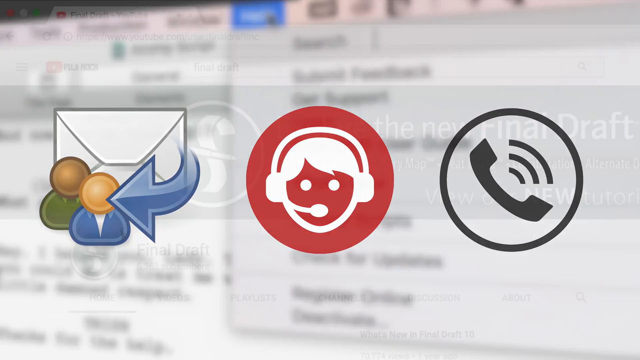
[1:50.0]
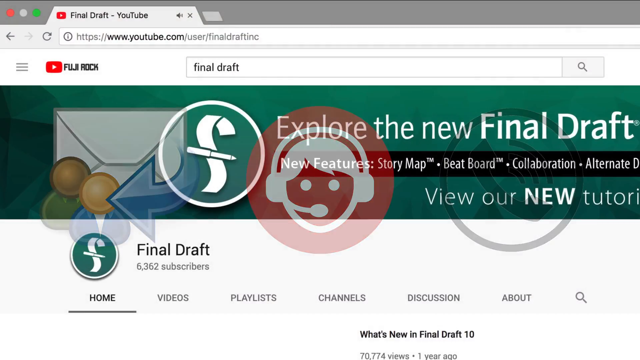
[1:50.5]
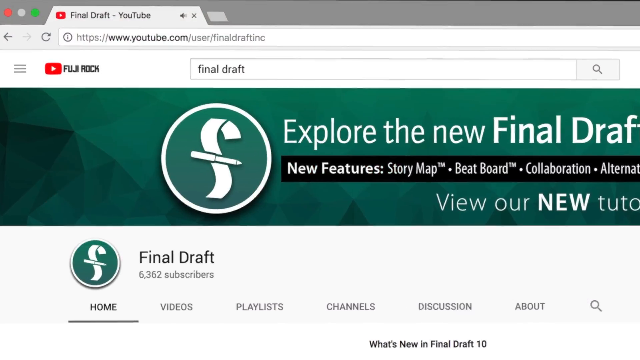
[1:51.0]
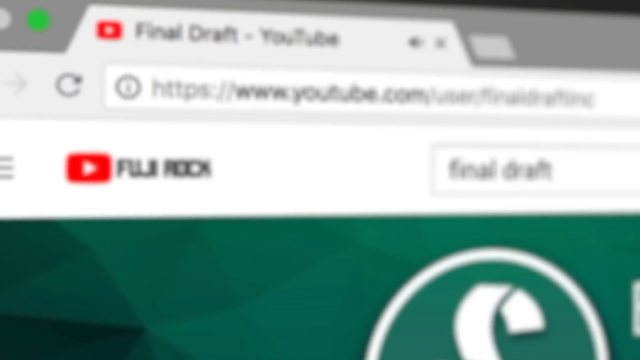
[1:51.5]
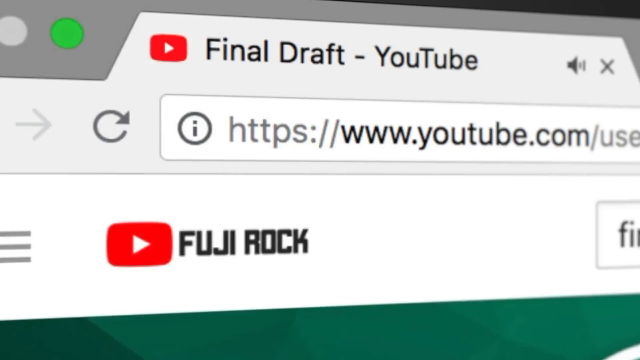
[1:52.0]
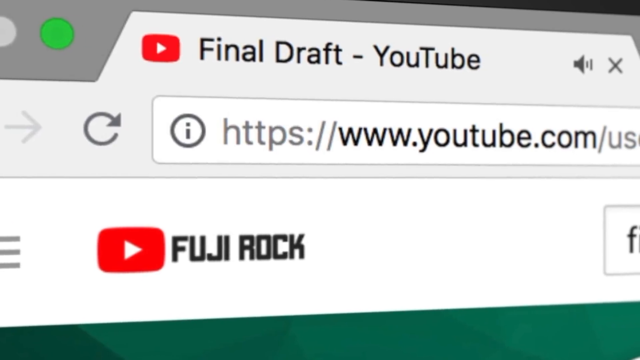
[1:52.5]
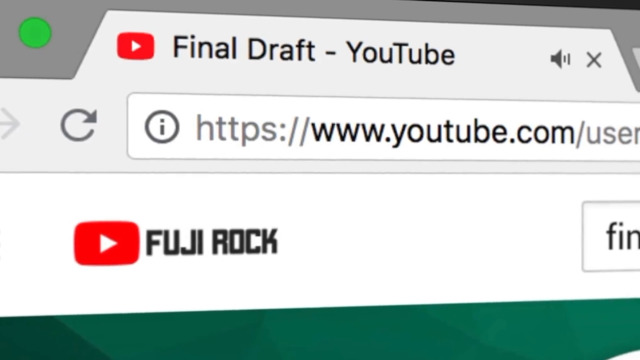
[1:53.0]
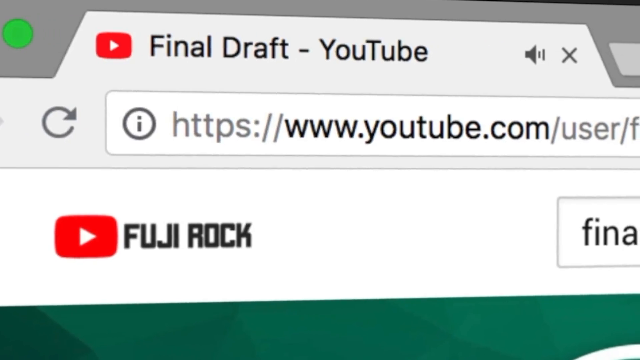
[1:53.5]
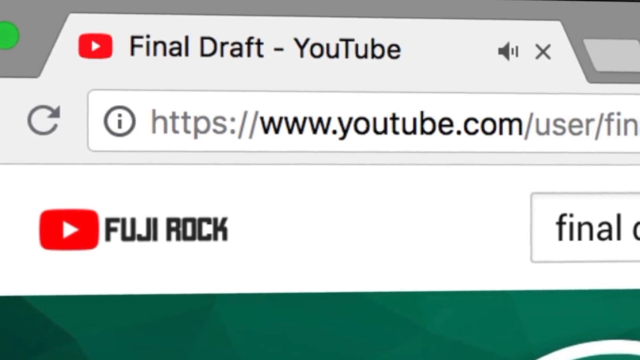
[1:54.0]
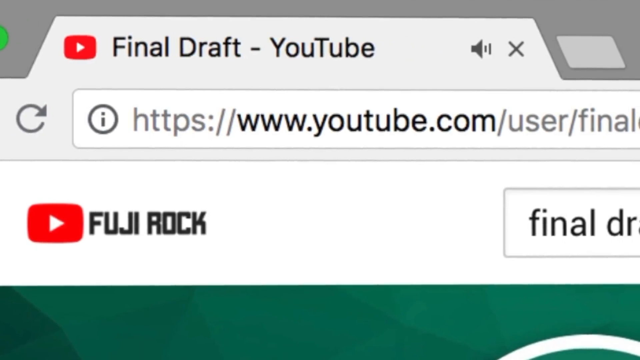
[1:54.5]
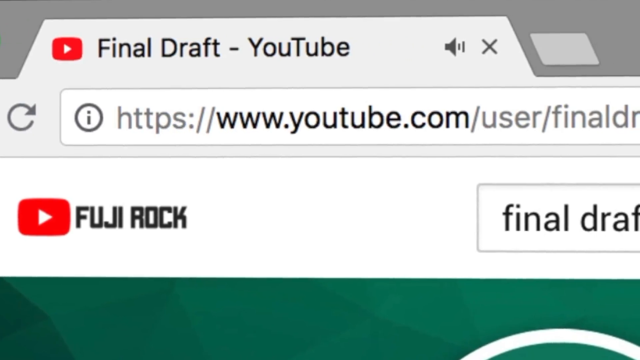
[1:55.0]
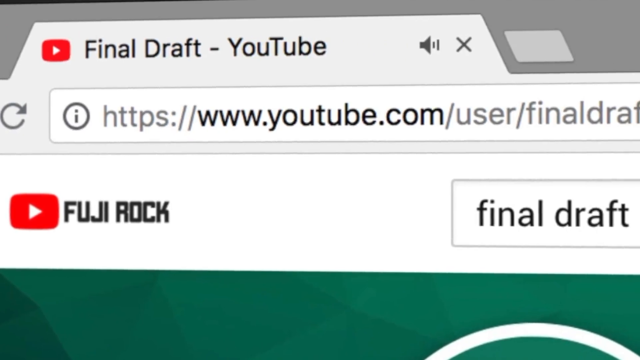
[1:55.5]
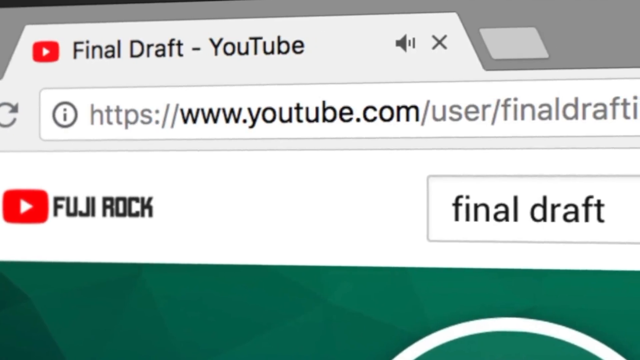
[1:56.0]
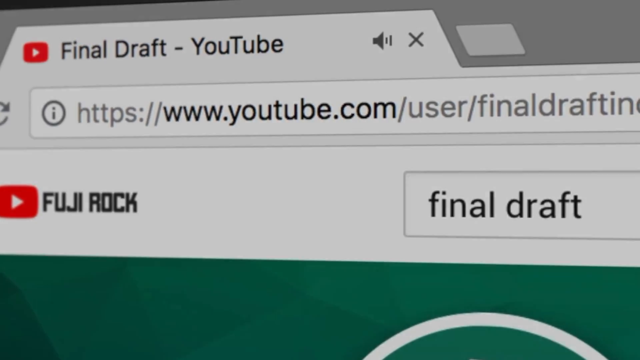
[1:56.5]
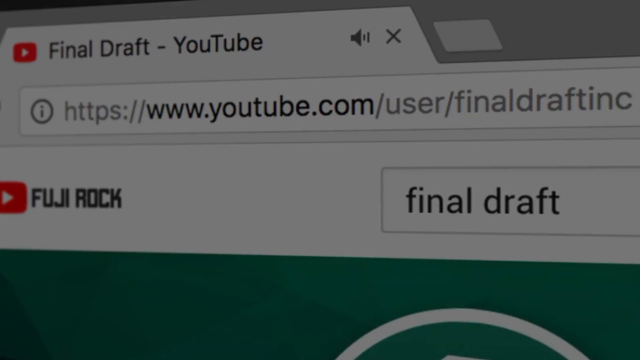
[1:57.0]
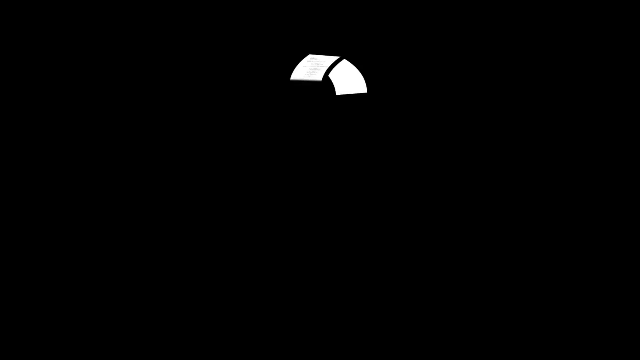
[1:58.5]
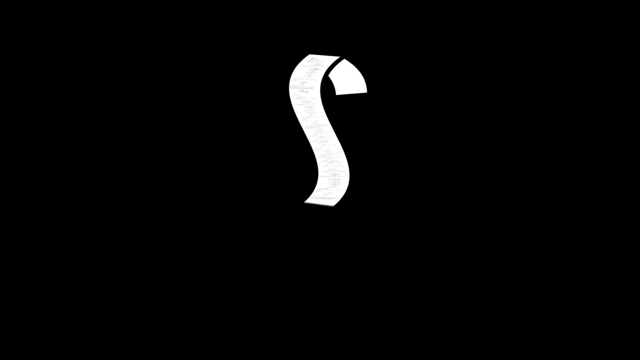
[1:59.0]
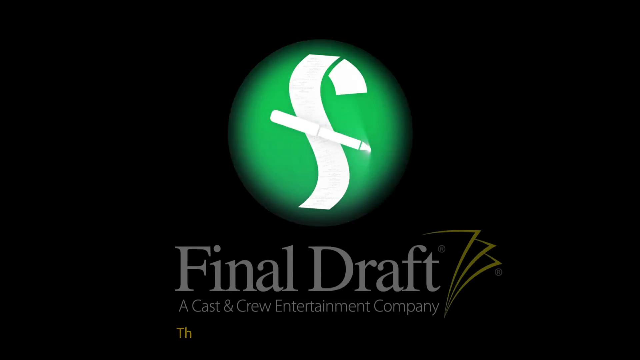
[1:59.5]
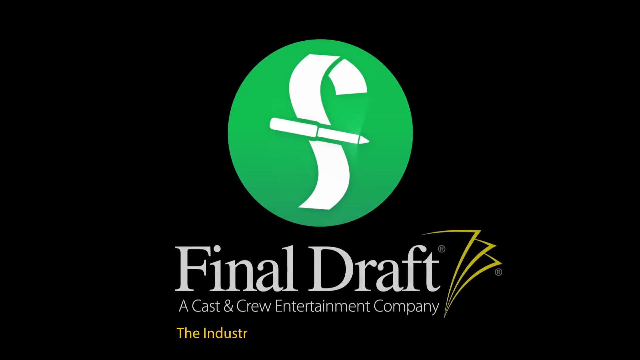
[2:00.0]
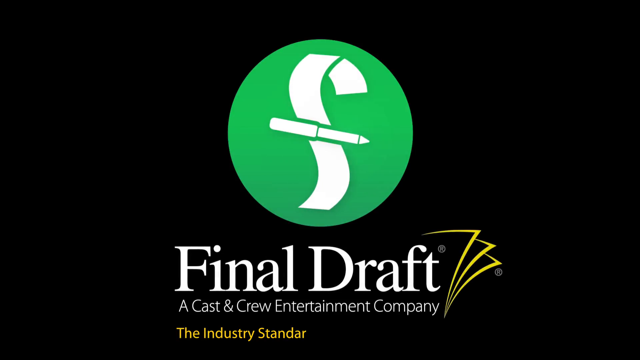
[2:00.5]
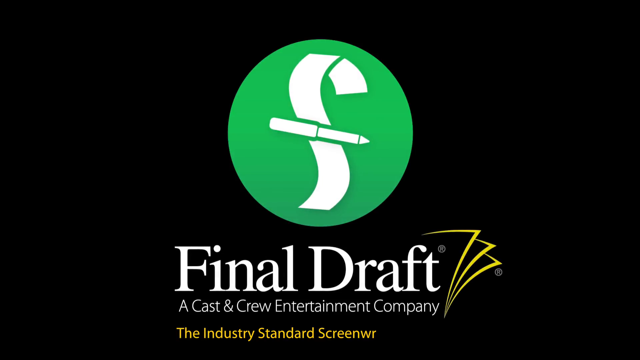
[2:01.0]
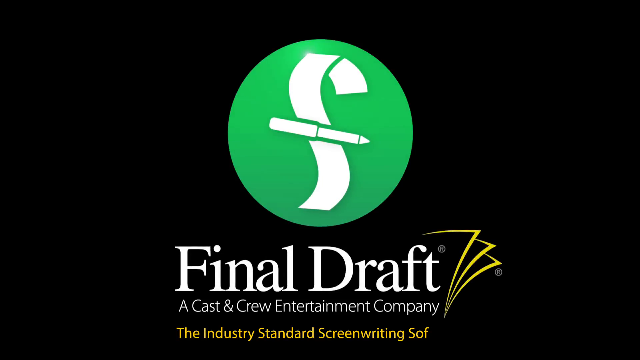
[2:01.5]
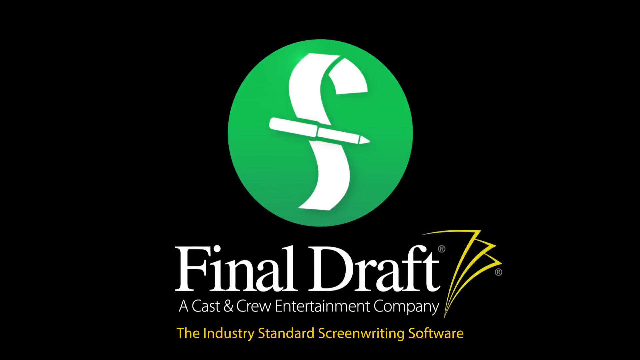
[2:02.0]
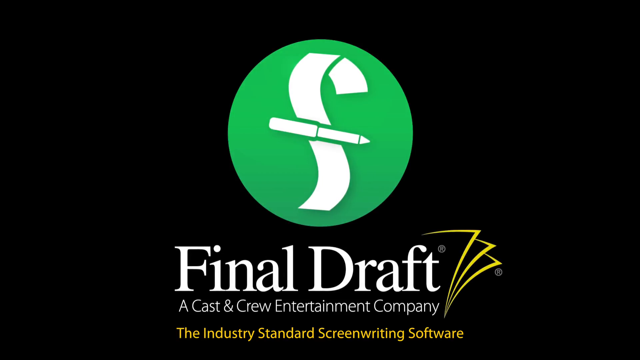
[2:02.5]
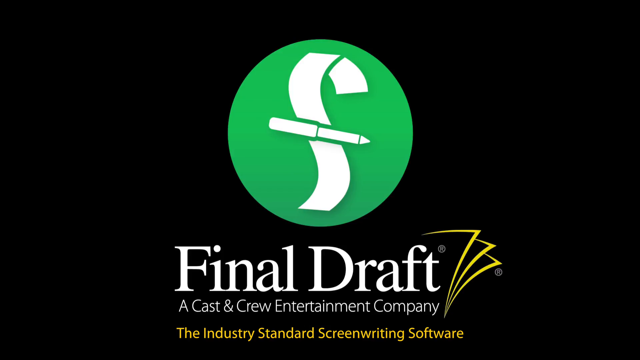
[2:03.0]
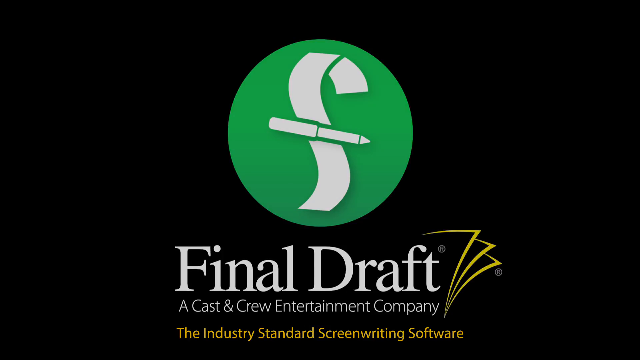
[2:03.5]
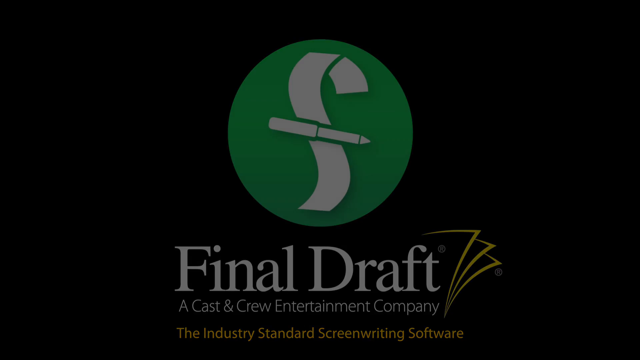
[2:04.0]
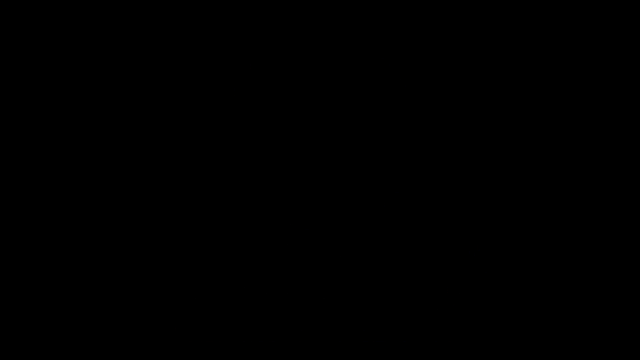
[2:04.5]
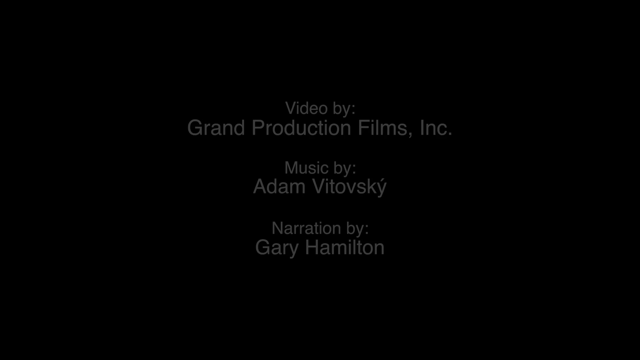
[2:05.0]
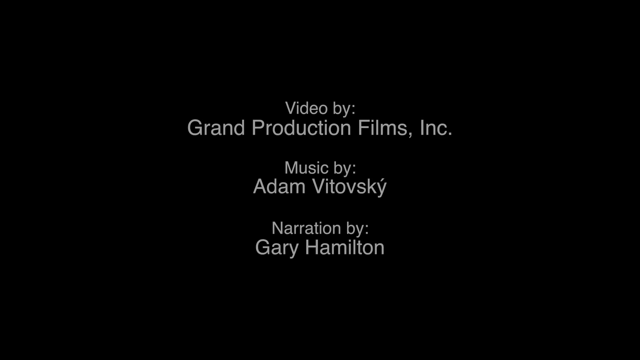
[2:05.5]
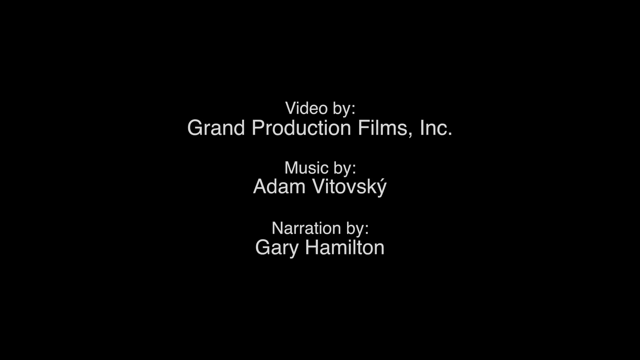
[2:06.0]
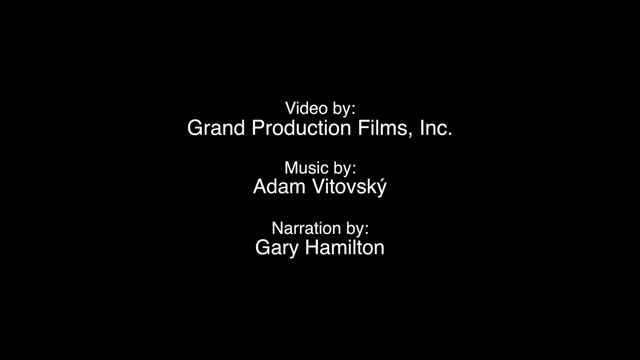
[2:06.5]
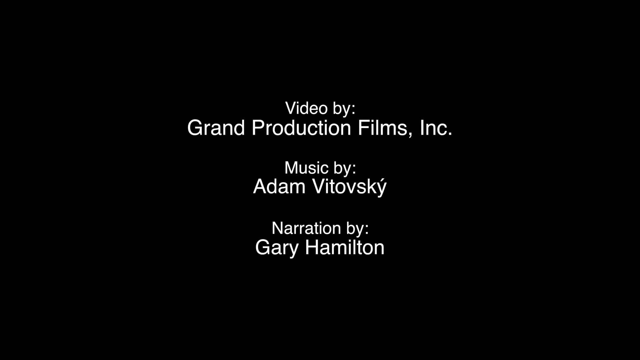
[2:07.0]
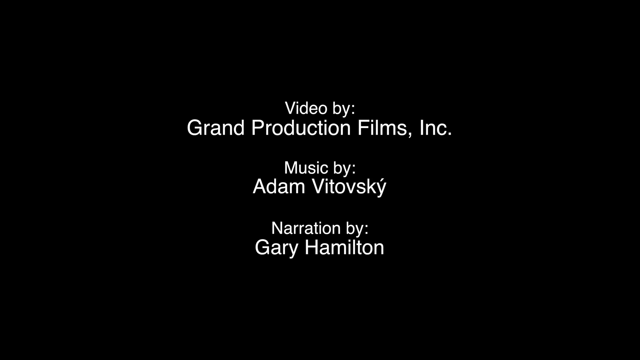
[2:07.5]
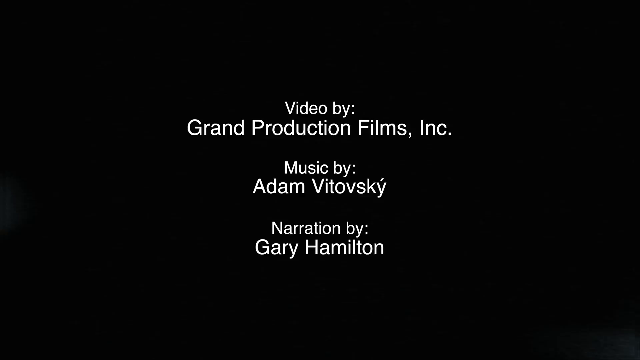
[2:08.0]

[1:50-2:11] Computer graphics fill the screen: on the left is a mail icon showing an envelope with an arrow pointing to a couple of people in front of the envelope; to the right of that is a red circle with a telecommunicator, a person wearing a headset, in its center; and on the right is a telephone symbol, a black circle with a telephone receiver inside and sound waves coming out of it. These fade away, revealing a website that says "explore the new Final Draft," which looks like Final Draft's YouTube channel. The camera zooms in to the top left of the screen where it says "Final Drafts - YouTube," with "Fuji Rock" underneath, and the site's address is visible. The view scrolls to the right, showing more of the address, and a search bar on the right side contains "Final Draft." The video fades to black and a Final Draft logo appears: a green circle with a piece of paper that kind of makes an F, almost looking like toilet paper, with a pen going through its center. Underneath it says "Final Draft, a cast and crew entertainment company." It stays for a while and then fades to black. Text then appears reading "video by Grand Production Films Incorporated, music by Adam Witowski, and narration by Gary Hamilton." Some lights blink on the screen, and the video ends.